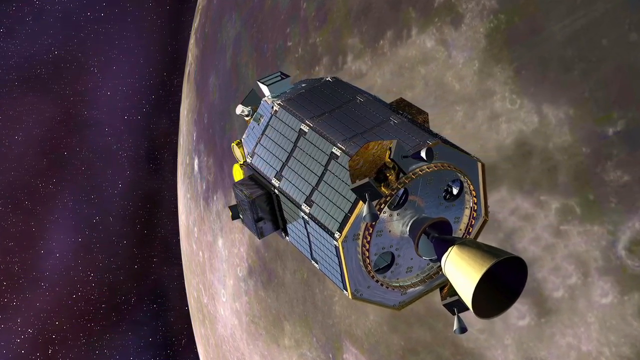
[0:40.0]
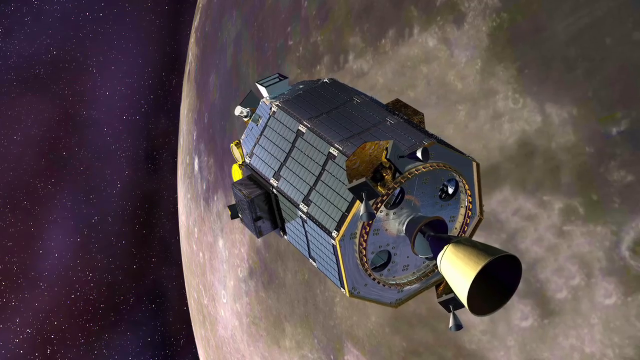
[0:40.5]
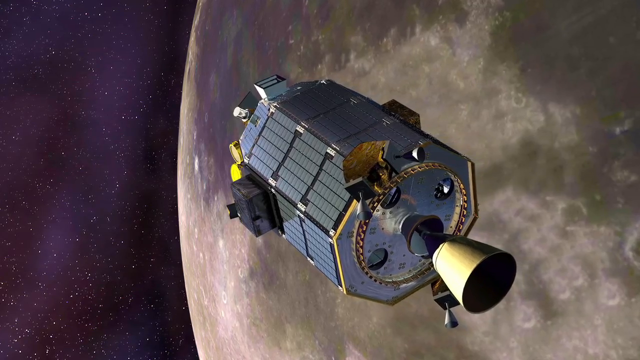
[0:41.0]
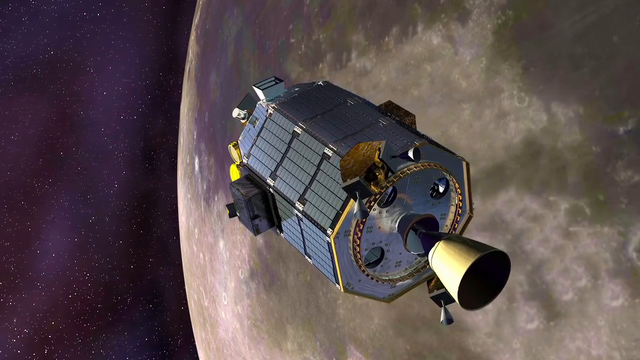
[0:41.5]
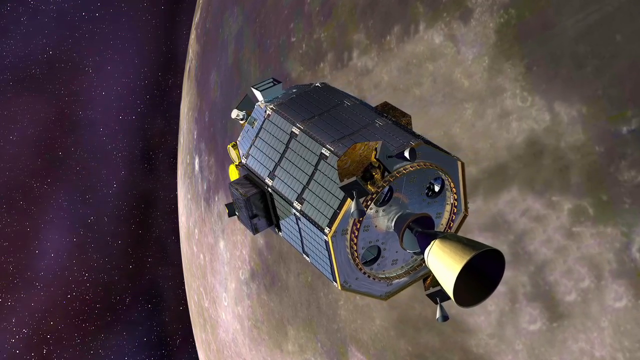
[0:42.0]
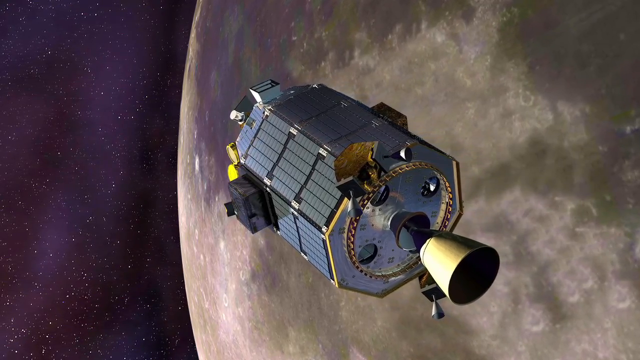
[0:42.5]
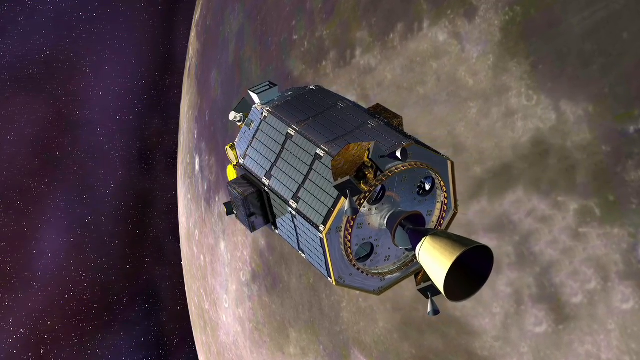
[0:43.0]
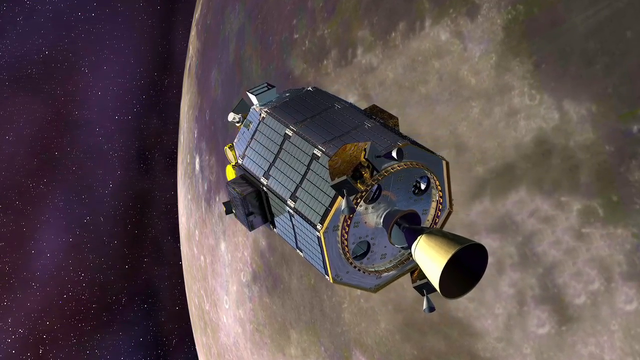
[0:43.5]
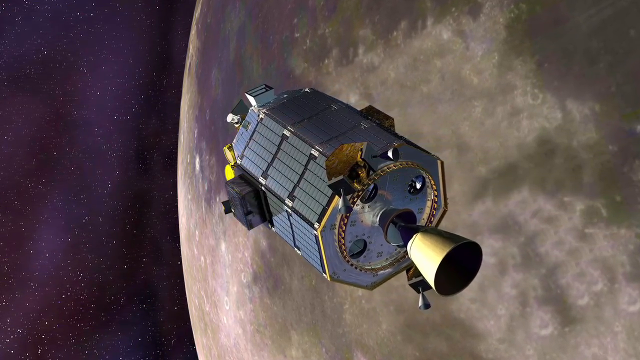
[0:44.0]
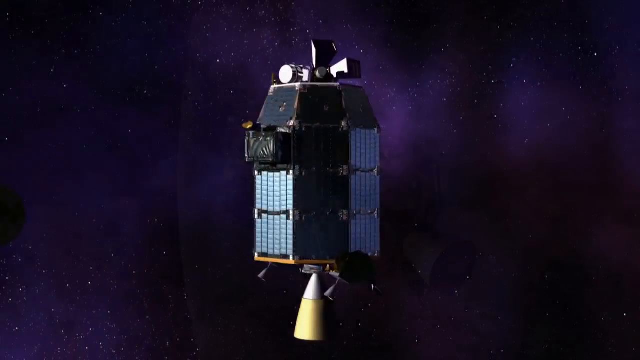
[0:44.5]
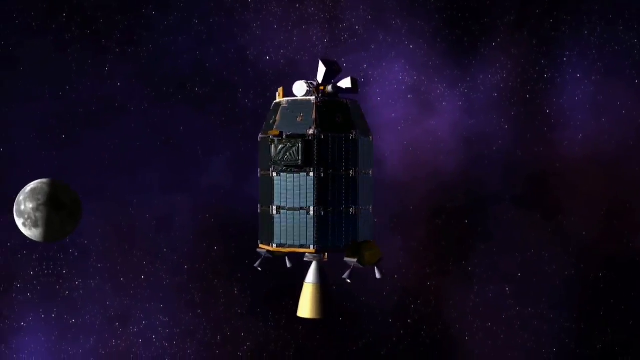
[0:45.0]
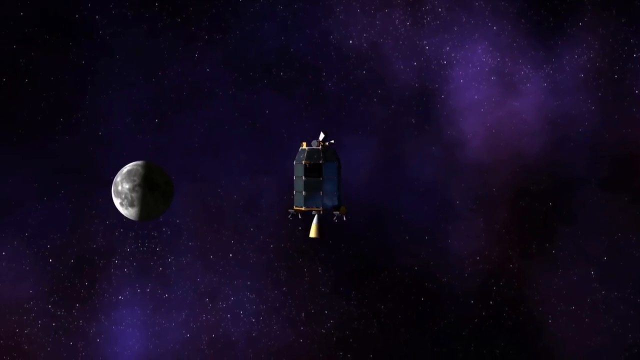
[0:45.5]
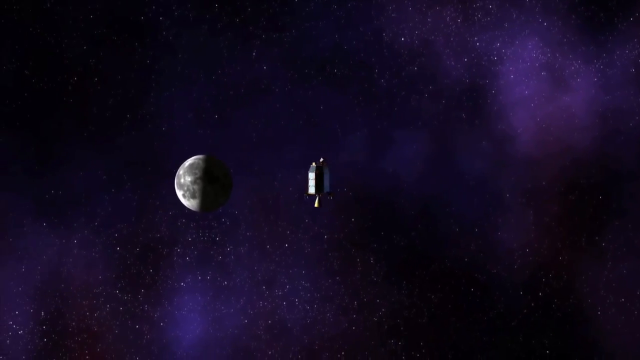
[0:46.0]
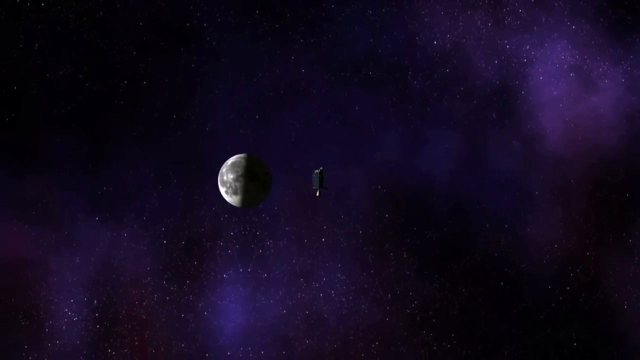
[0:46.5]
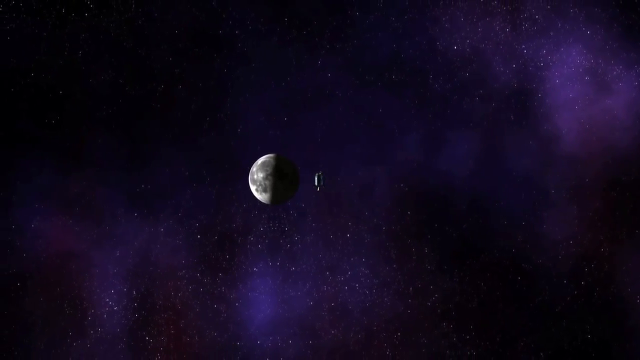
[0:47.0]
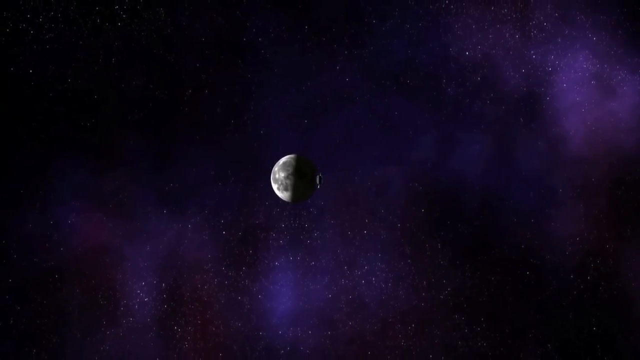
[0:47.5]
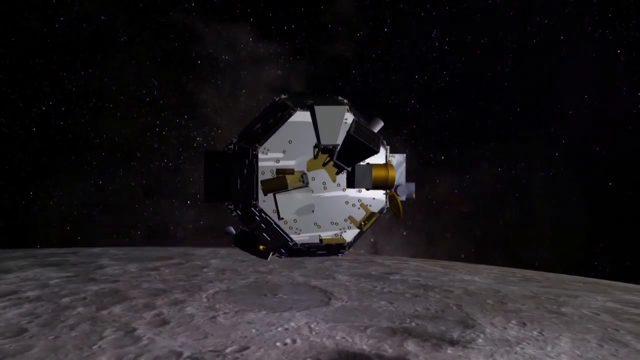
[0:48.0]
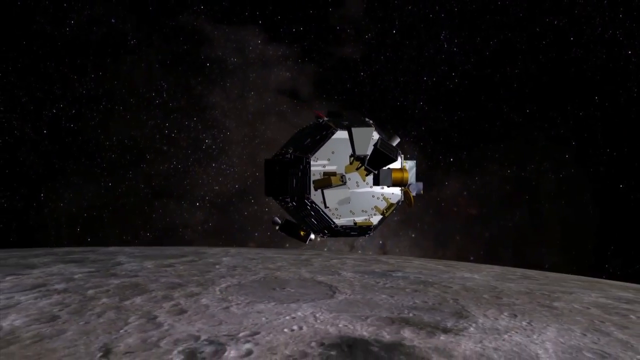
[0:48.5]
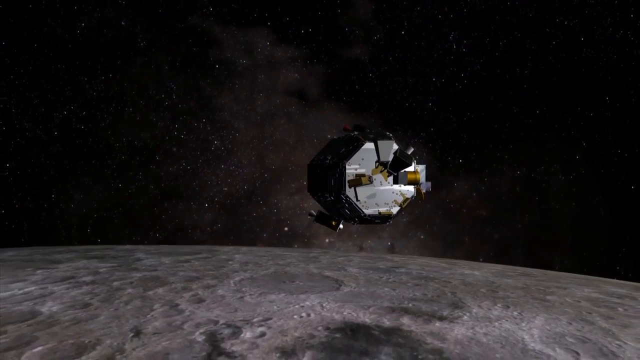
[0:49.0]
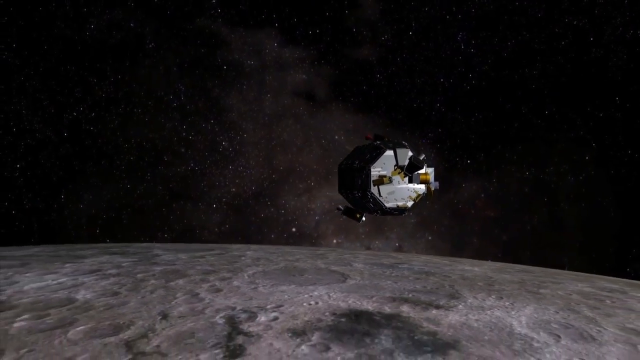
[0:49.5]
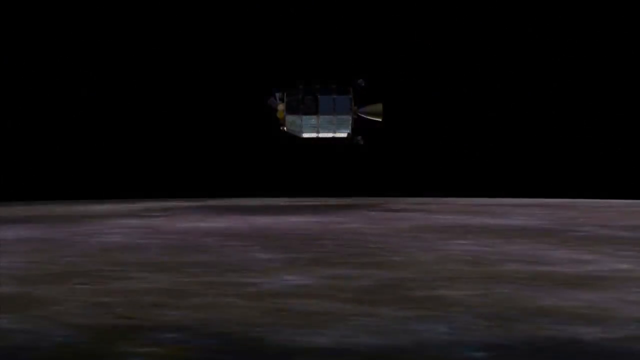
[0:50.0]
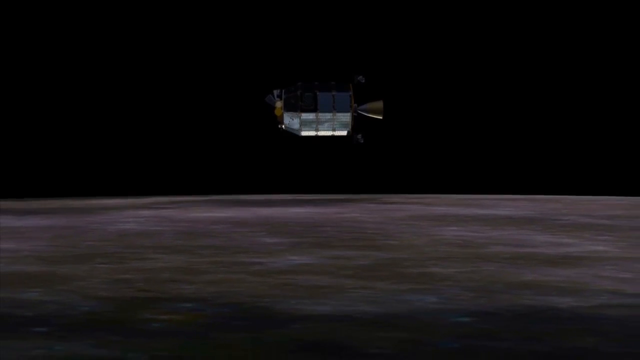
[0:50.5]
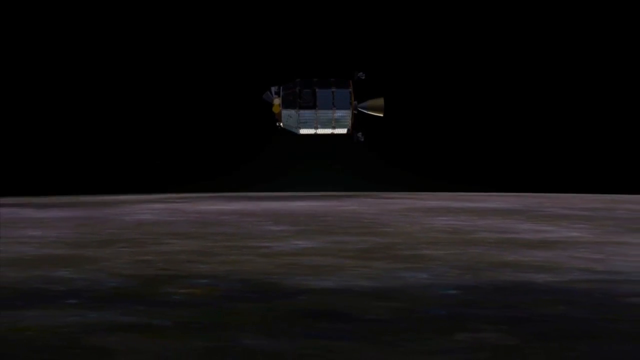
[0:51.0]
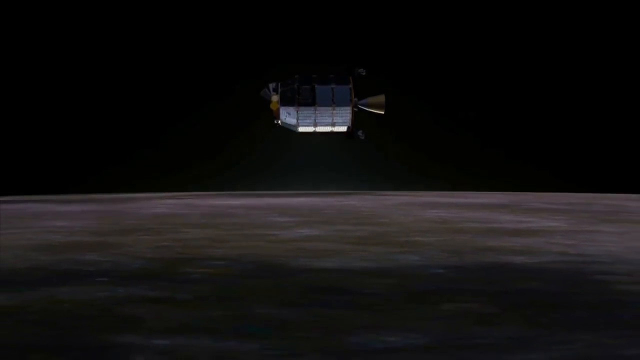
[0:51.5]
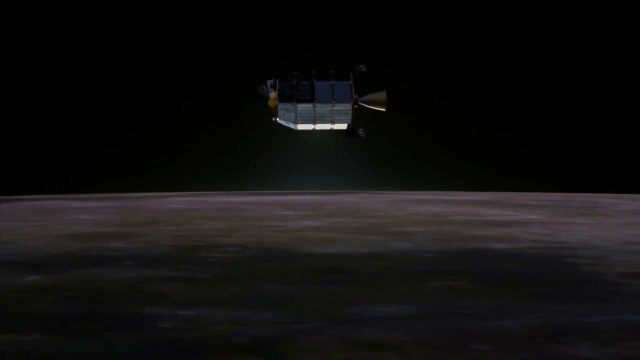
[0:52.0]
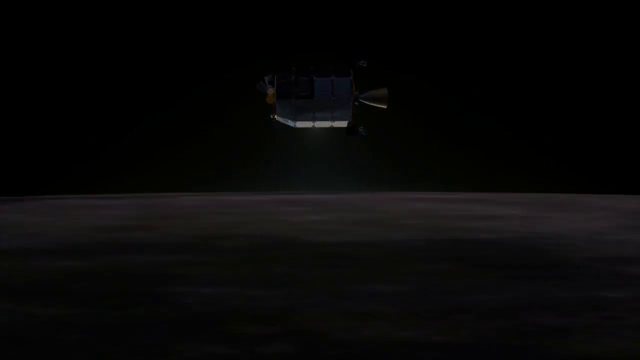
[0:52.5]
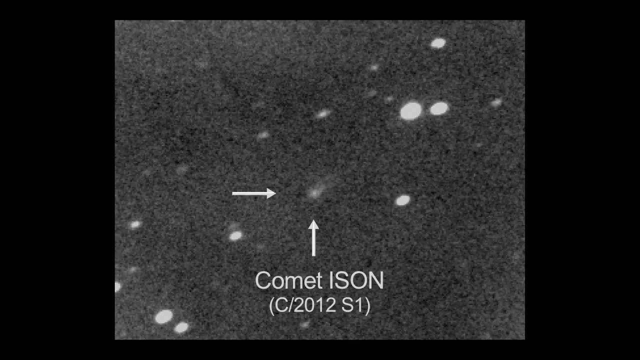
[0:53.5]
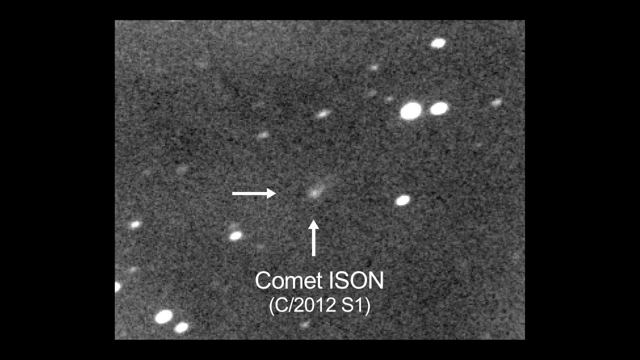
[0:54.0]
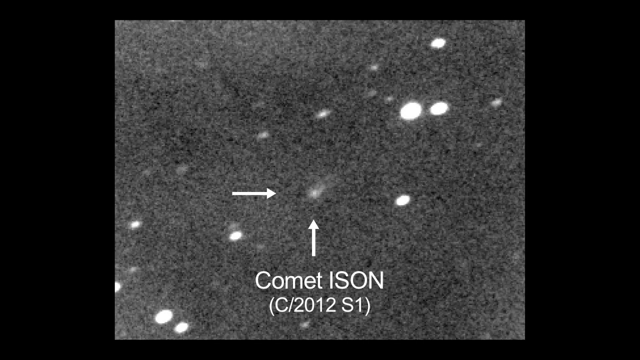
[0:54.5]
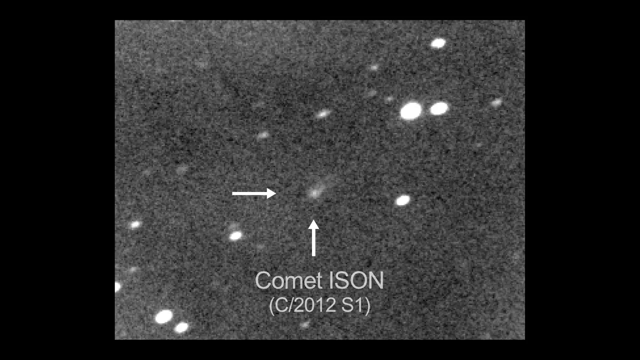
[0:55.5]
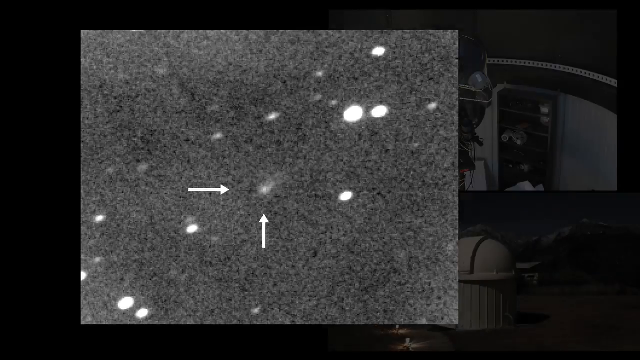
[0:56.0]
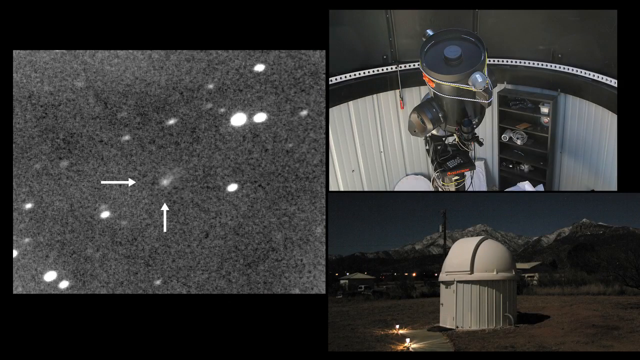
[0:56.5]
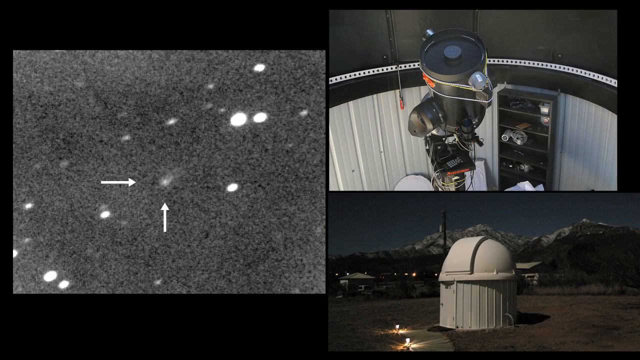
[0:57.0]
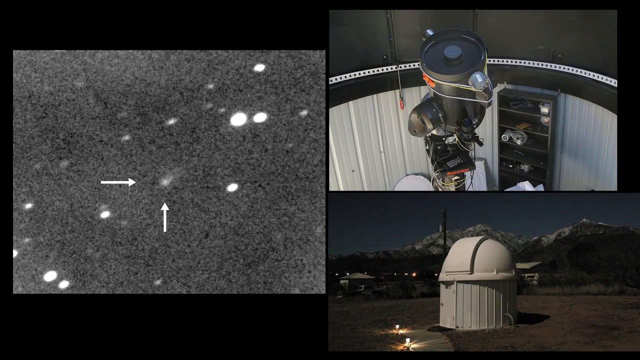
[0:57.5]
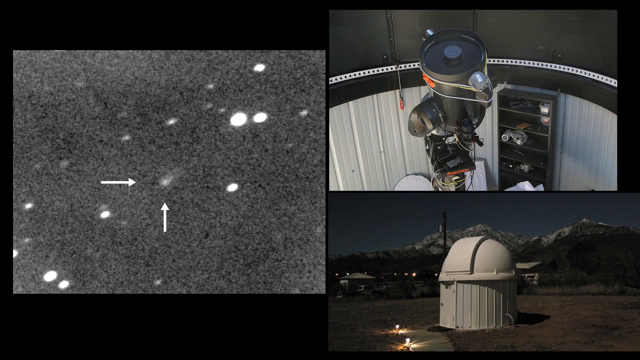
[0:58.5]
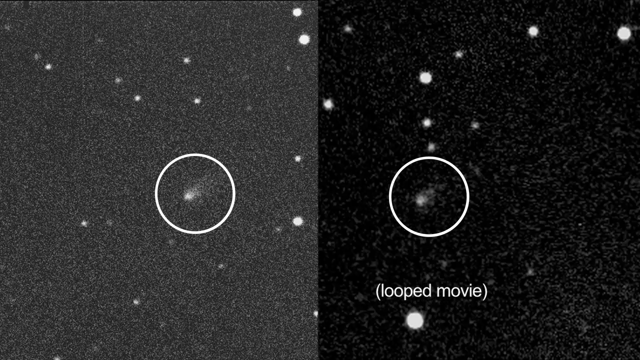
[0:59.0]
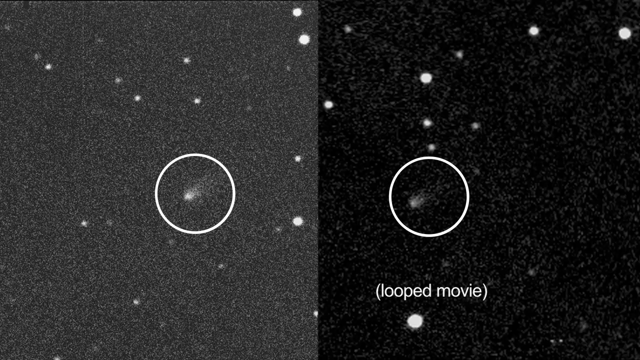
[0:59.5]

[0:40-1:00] A computer-generated rocket blasts off and its pieces come apart, leaving the landing part, which flies clockwise around the Earth and then heads to the moon. Comet ISON is then shown with "(C-2012S1)" in parentheses and a couple of arrows pointing to the comet. A picture of a telescope, possibly Palomar, follows, showing the actual telescope and then the outside of the observatory, and then something very grainy in the sky.